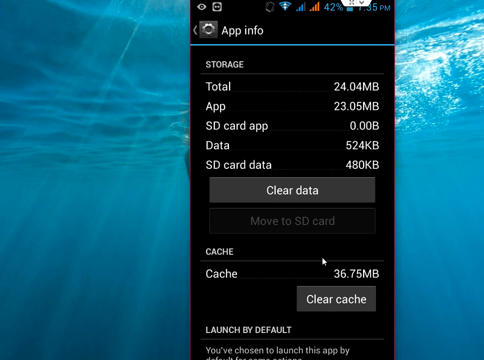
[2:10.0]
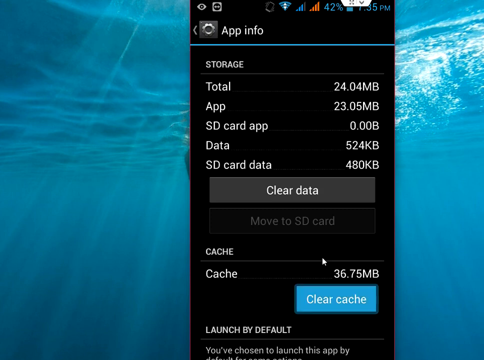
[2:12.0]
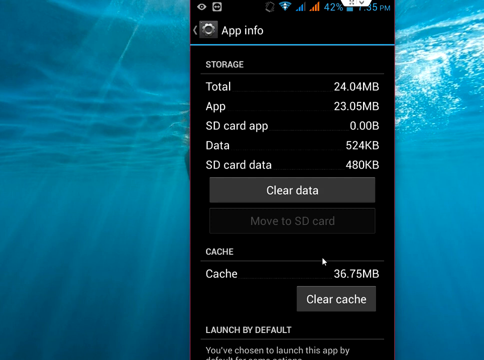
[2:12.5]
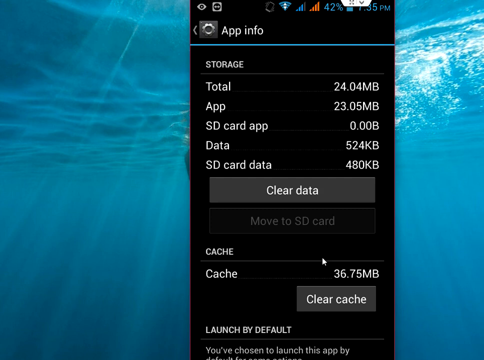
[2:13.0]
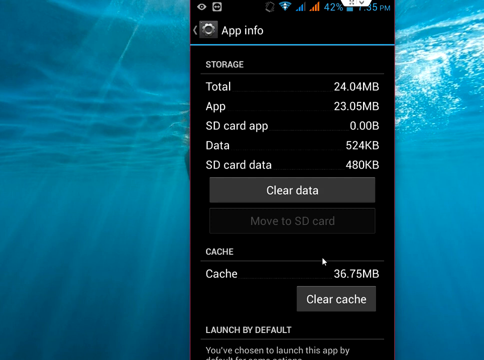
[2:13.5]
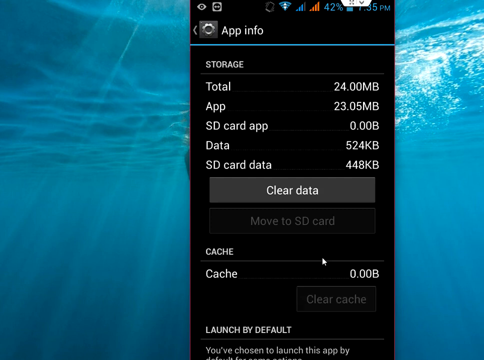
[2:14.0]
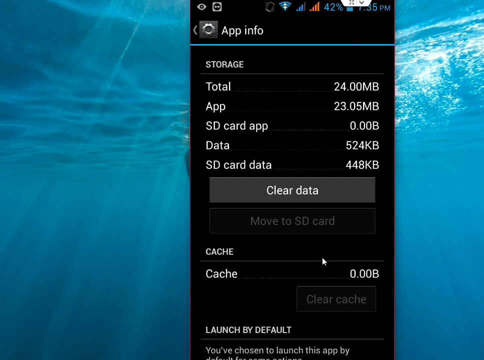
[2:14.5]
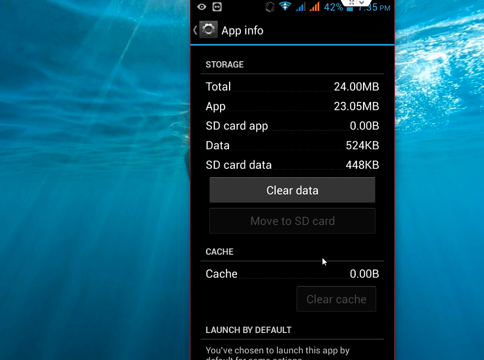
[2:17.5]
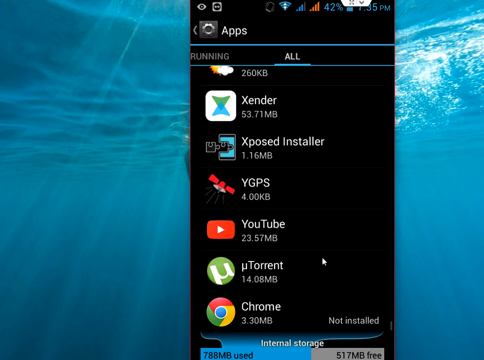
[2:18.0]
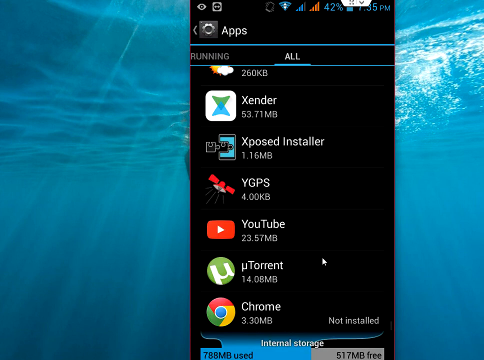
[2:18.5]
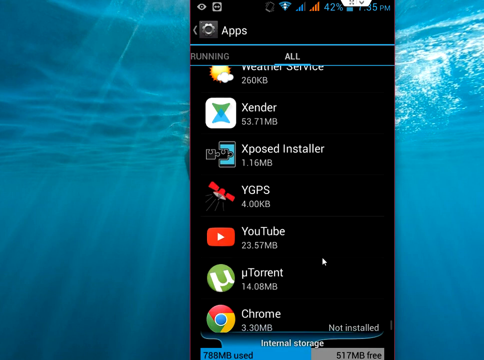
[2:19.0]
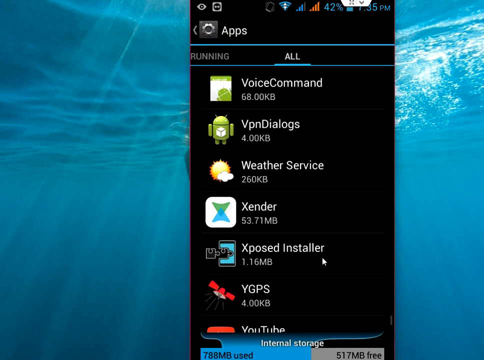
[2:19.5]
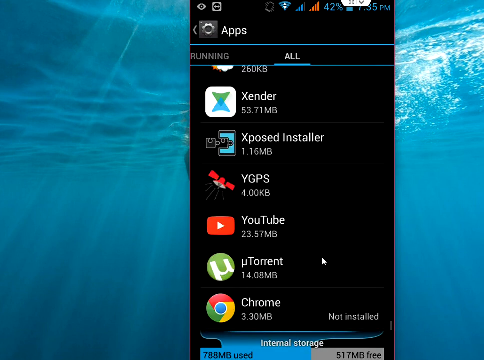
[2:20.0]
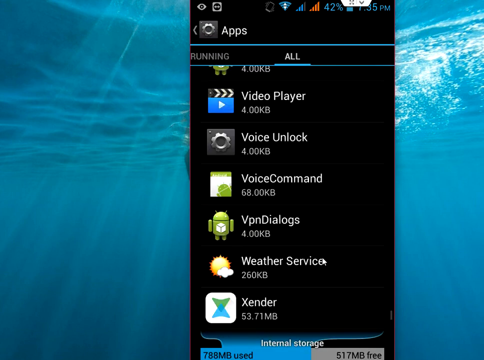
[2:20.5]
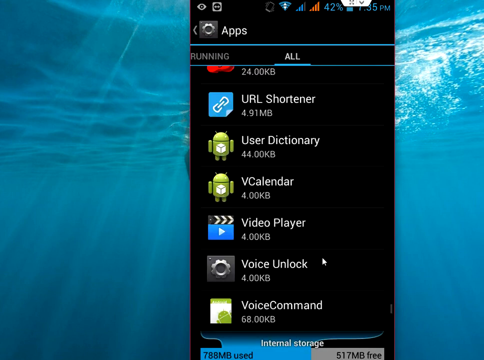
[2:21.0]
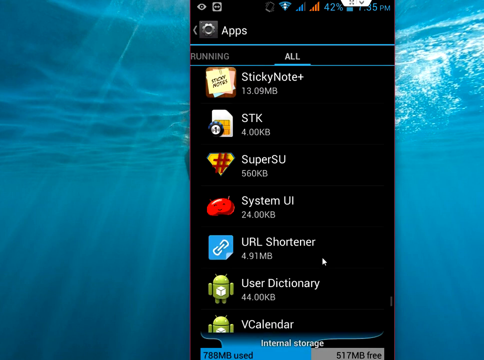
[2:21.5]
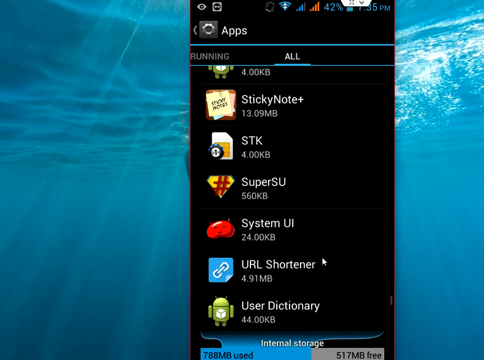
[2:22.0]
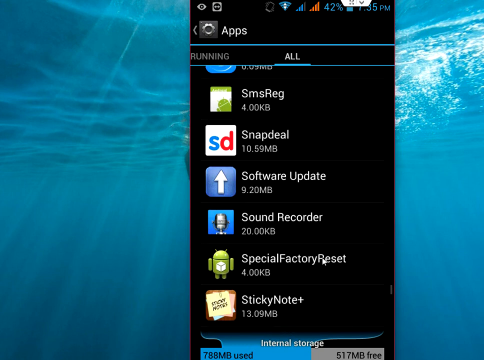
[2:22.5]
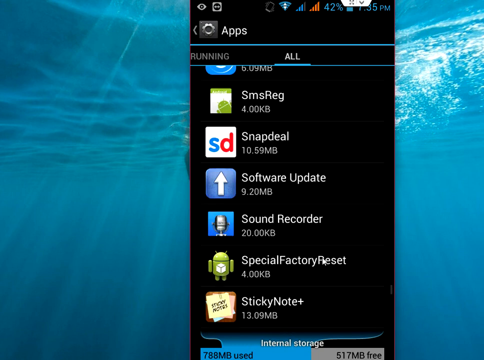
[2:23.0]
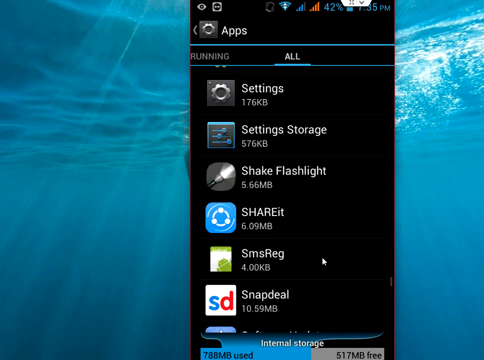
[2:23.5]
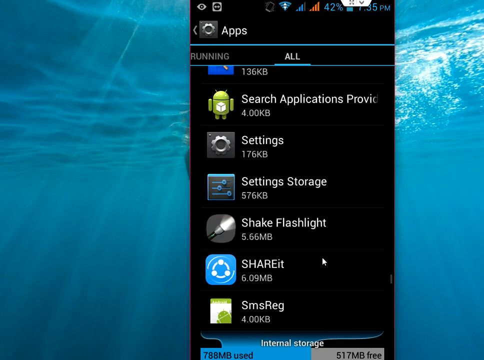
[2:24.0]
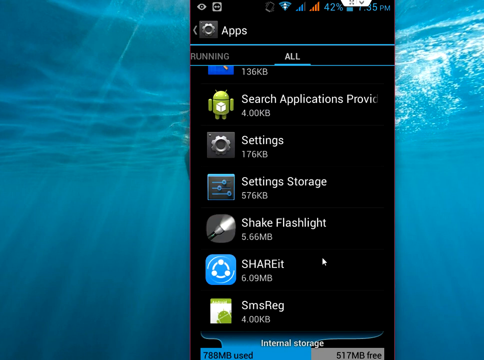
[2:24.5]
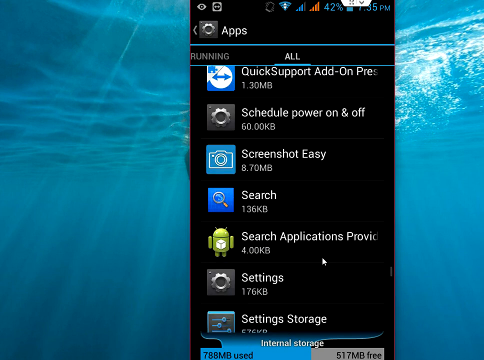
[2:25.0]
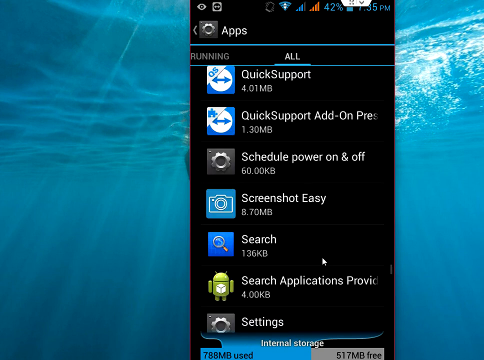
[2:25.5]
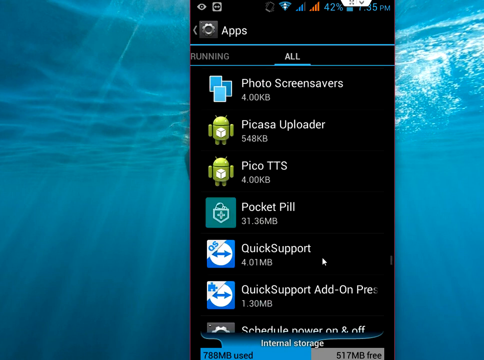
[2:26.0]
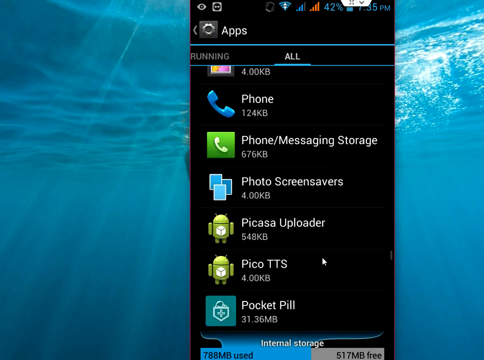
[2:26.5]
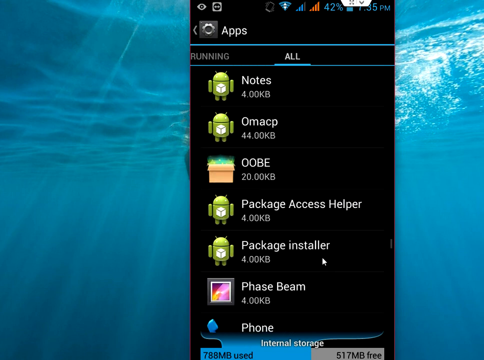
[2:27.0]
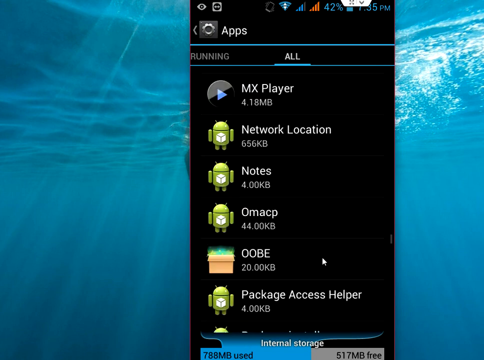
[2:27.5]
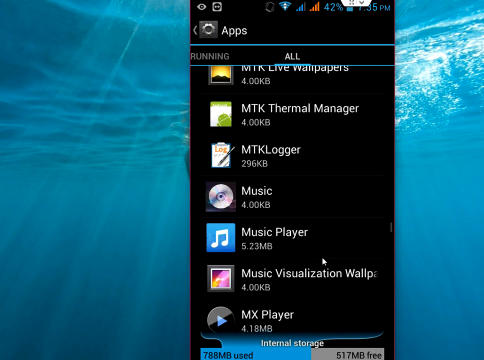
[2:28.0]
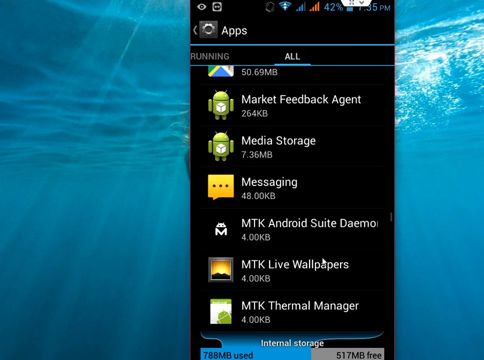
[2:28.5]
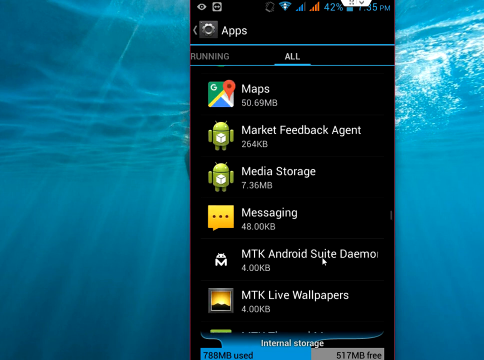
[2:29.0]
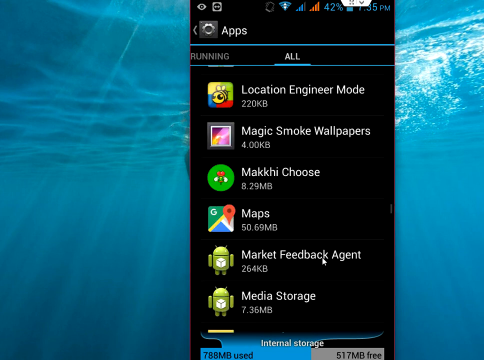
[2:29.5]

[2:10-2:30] In the YouTube app, the cache is at 36.75 gigabytes, and the user clicks the Clear Cache button. The user then exits the YouTube app and starts scrolling up through the S's, the P's, the M's and the L's, apparently looking for other apps, and keeps scrolling up without apparently finding anything of interest. The background and the smartphone screen box stay static; only the scrolling, the cursor movement and the button presses change.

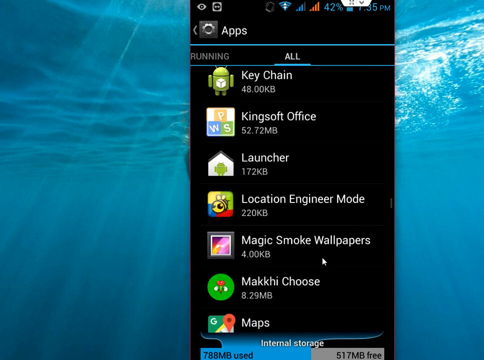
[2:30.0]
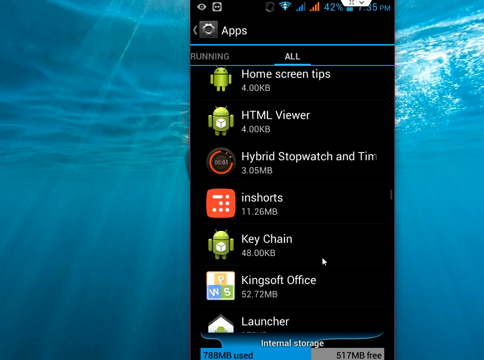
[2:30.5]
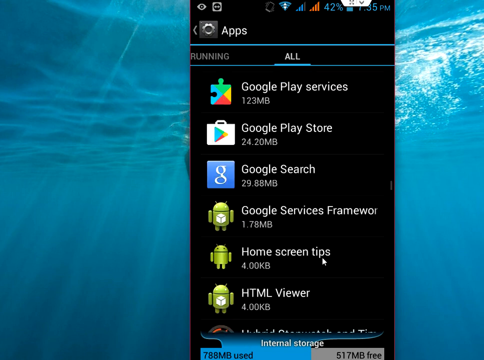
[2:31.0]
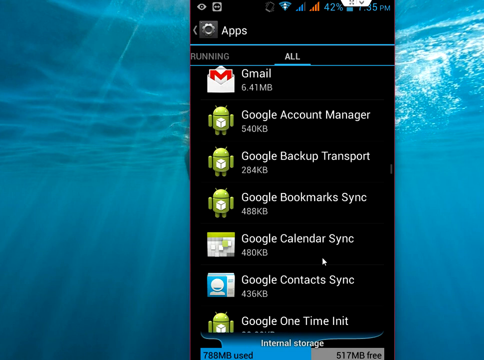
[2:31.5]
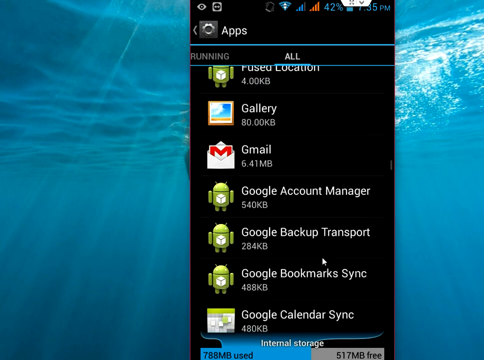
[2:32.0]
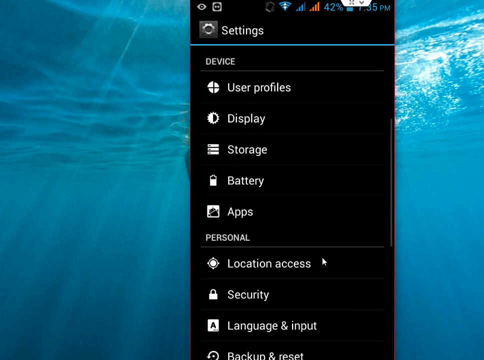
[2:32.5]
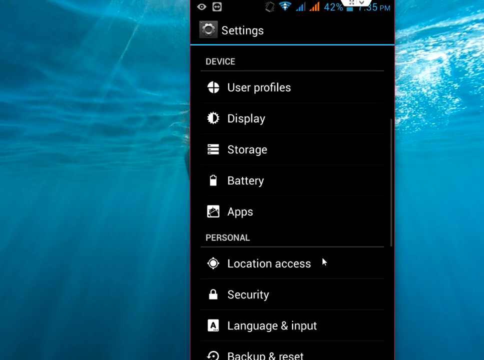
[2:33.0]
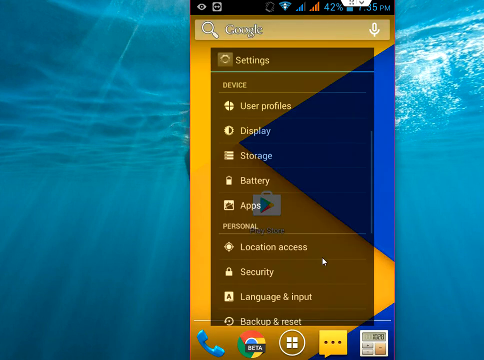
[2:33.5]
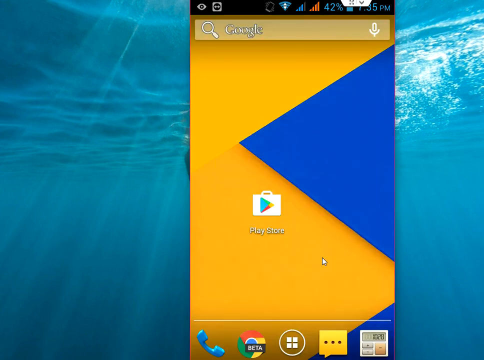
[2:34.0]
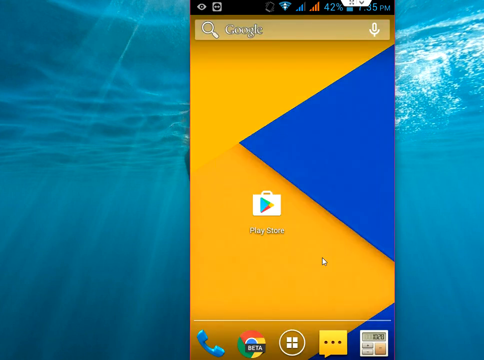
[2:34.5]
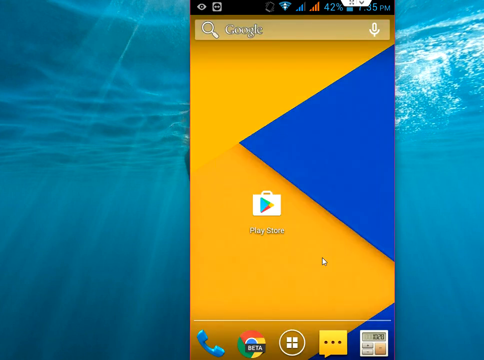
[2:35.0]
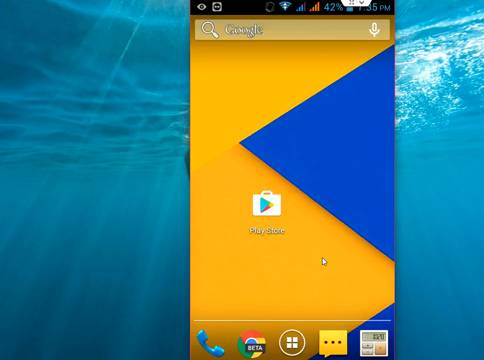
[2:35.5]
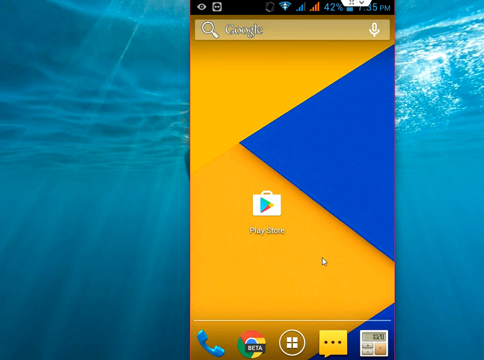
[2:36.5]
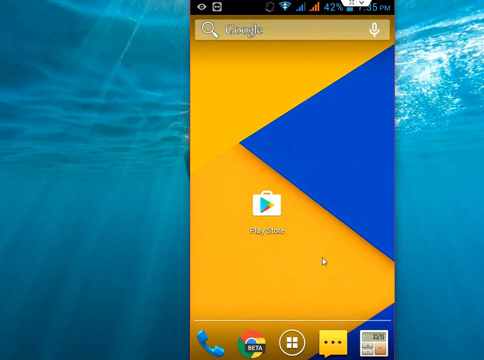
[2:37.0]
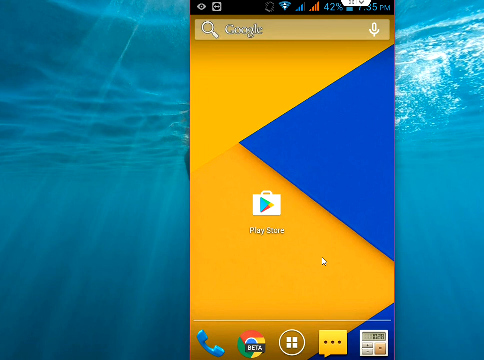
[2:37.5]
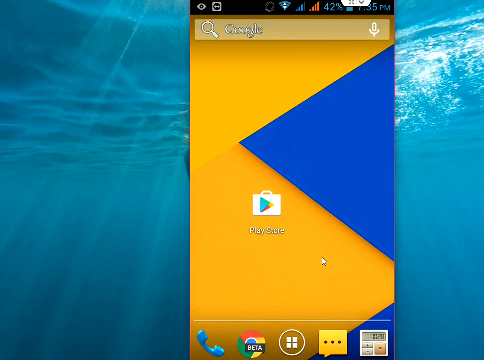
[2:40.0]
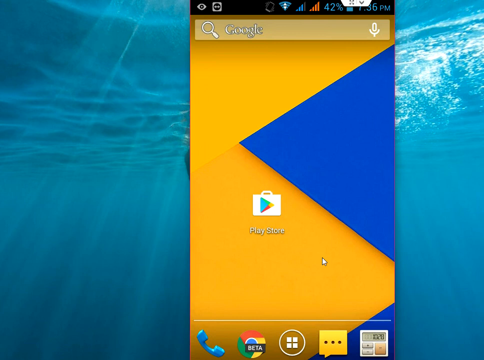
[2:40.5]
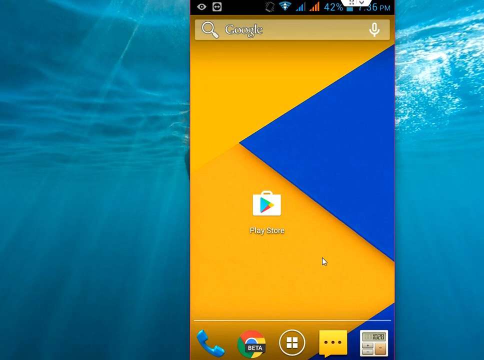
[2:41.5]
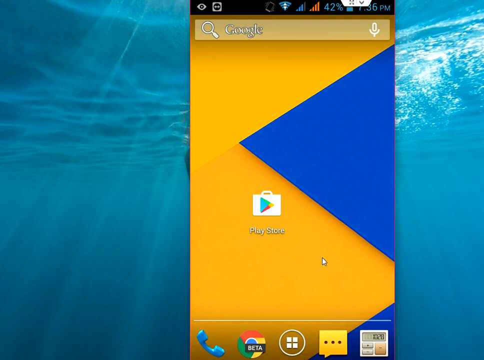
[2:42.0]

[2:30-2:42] The user keeps scrolling up, then exits the settings area and returns to the main screen of the smartphone, apparently having finished clearing the cache. The cursor stays static. The status bar at the top, the underwater background photograph and the icons are the same as before.